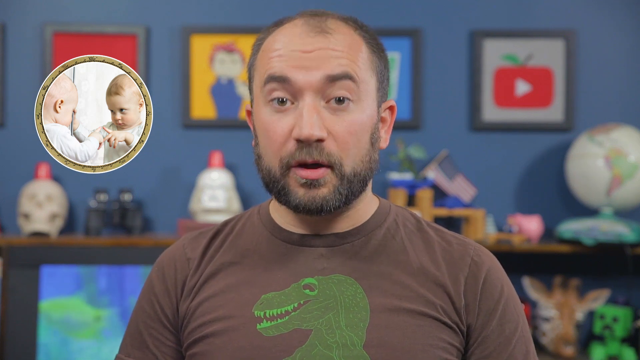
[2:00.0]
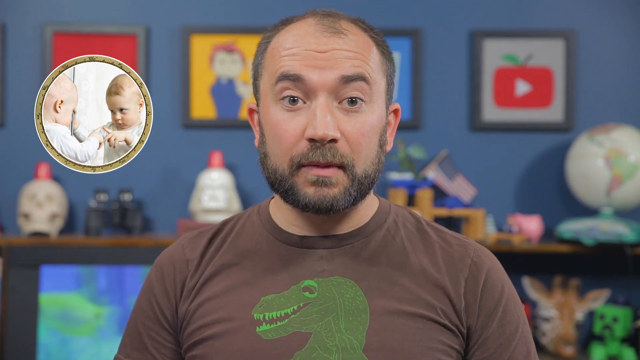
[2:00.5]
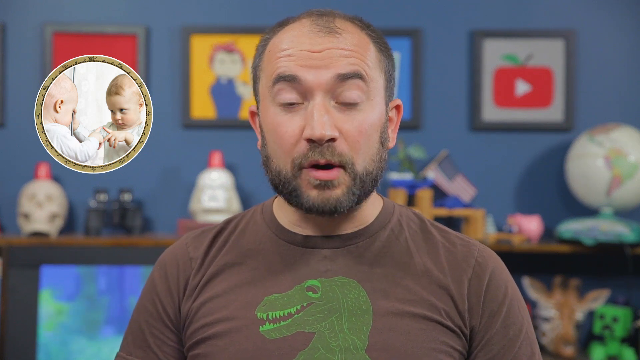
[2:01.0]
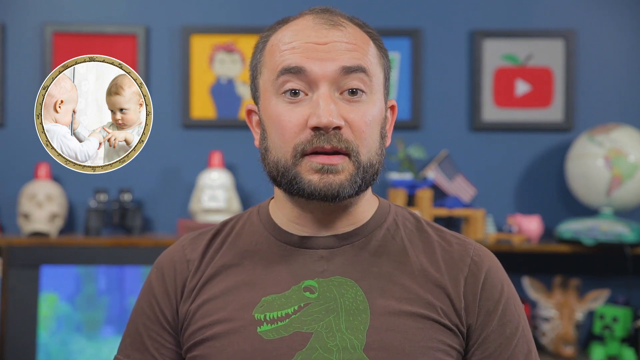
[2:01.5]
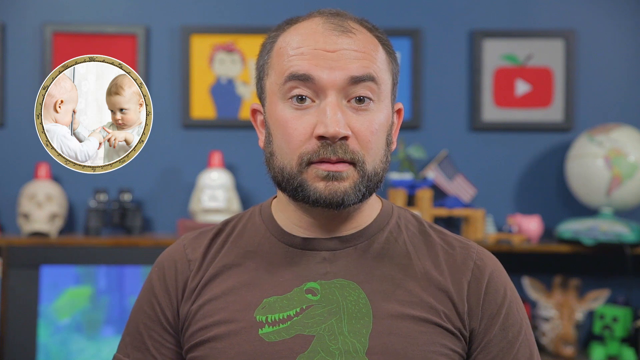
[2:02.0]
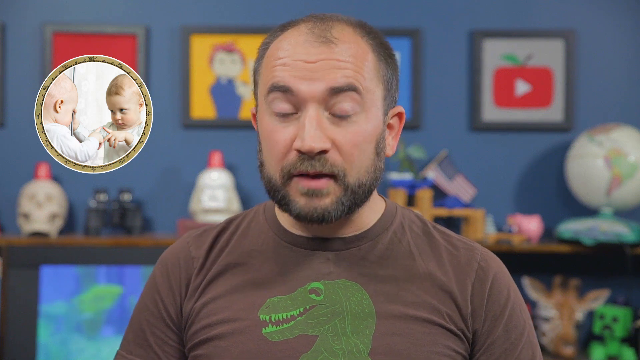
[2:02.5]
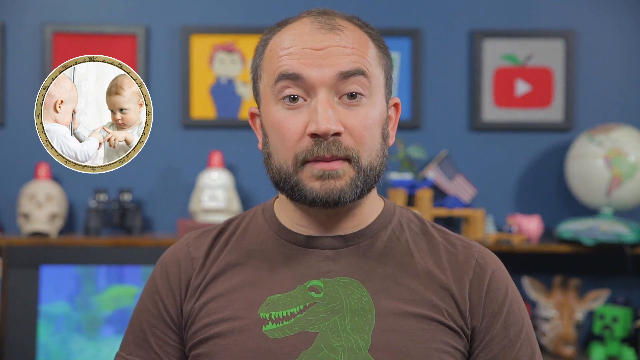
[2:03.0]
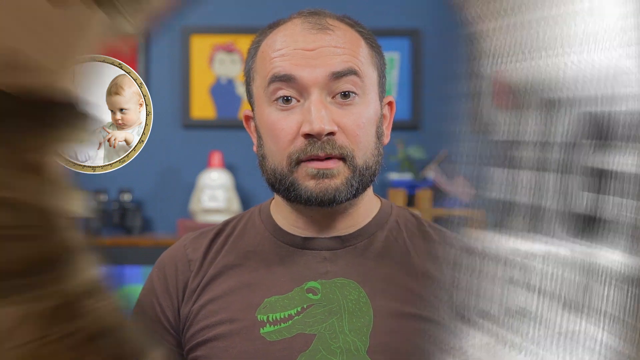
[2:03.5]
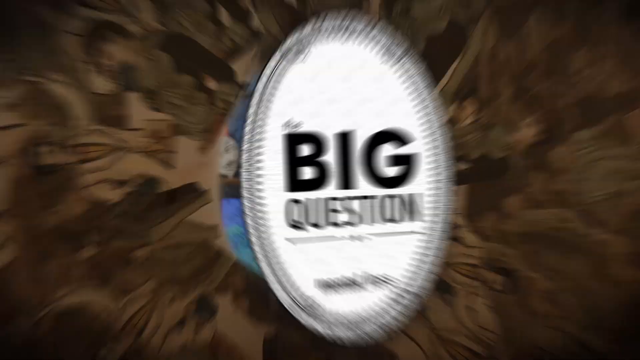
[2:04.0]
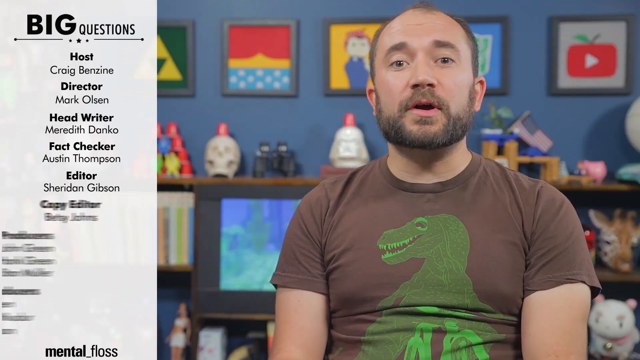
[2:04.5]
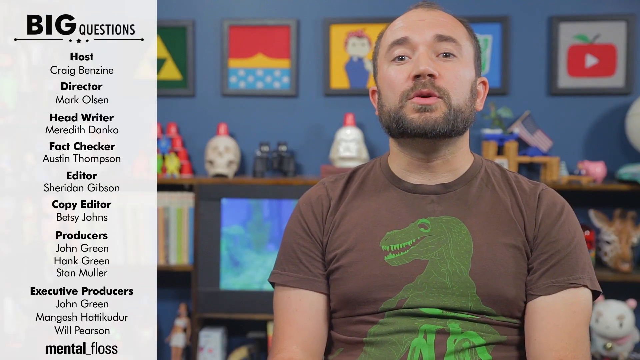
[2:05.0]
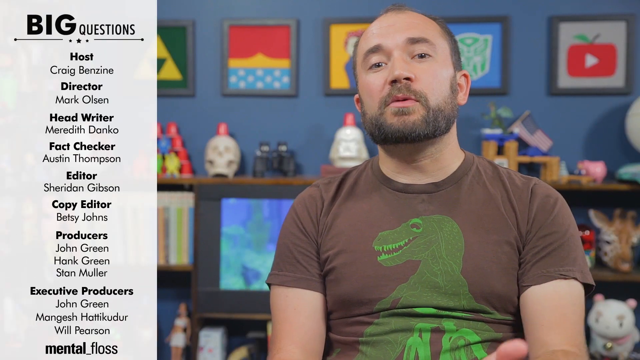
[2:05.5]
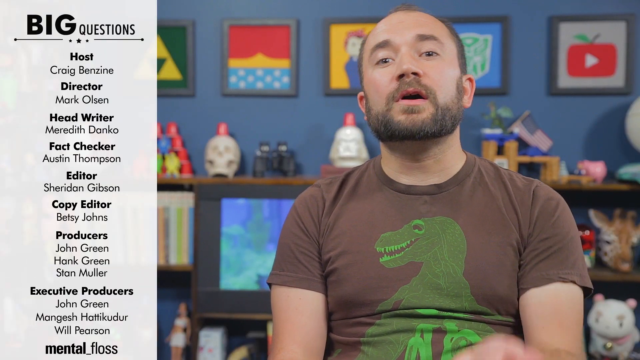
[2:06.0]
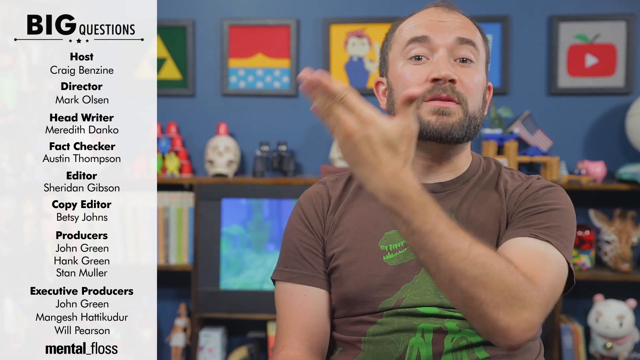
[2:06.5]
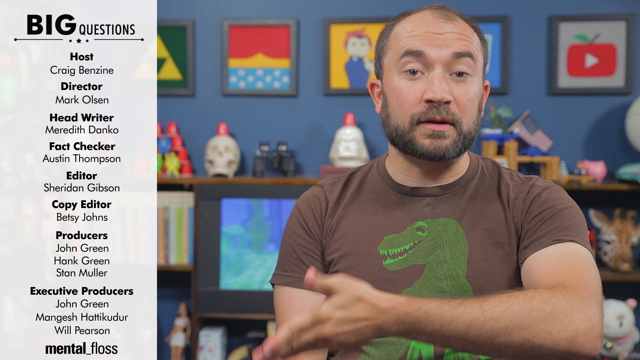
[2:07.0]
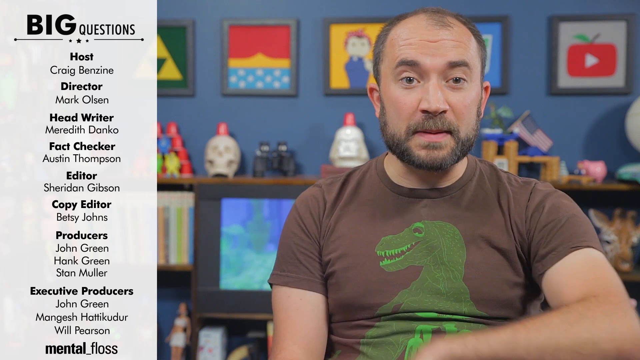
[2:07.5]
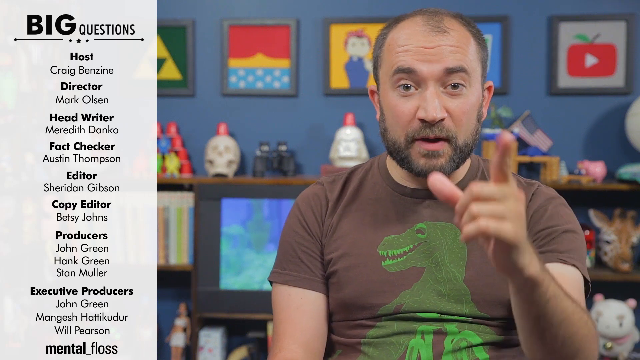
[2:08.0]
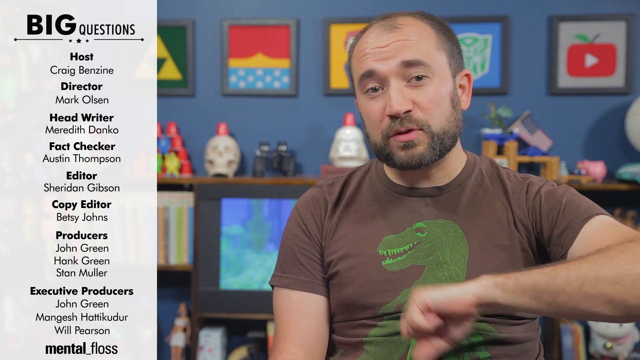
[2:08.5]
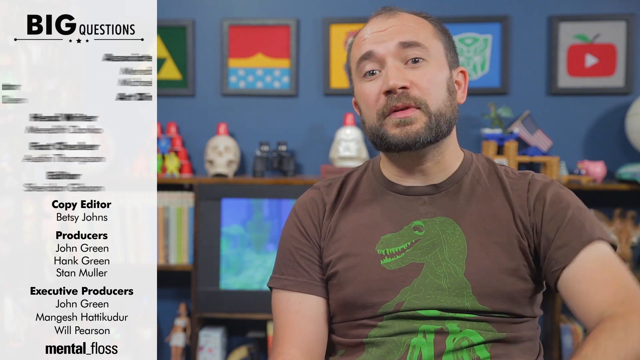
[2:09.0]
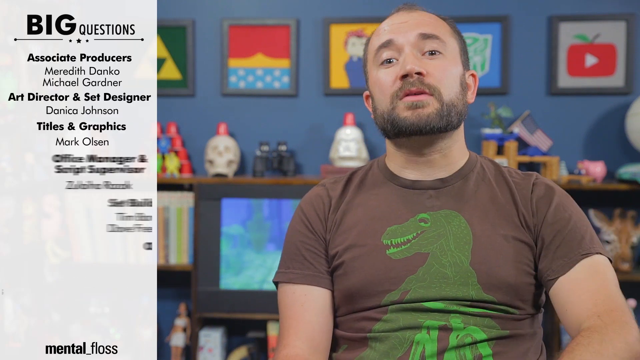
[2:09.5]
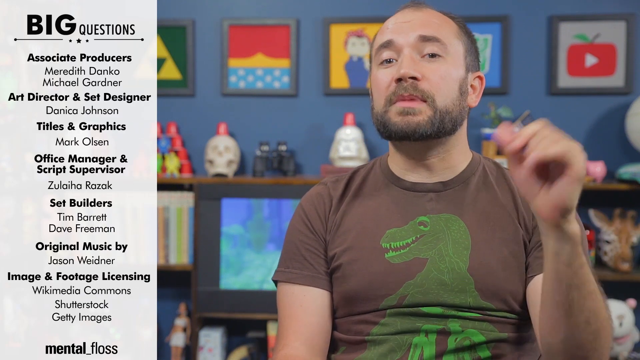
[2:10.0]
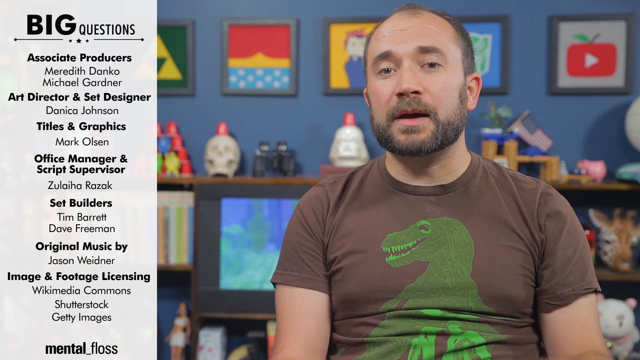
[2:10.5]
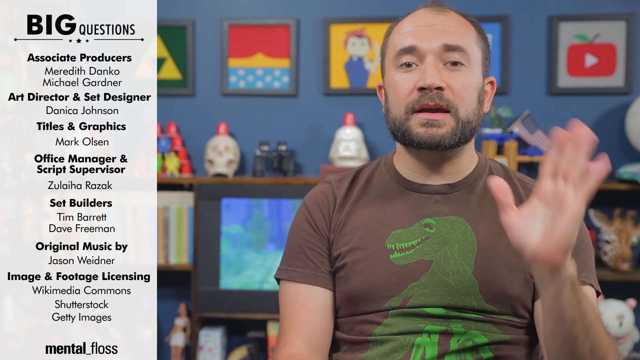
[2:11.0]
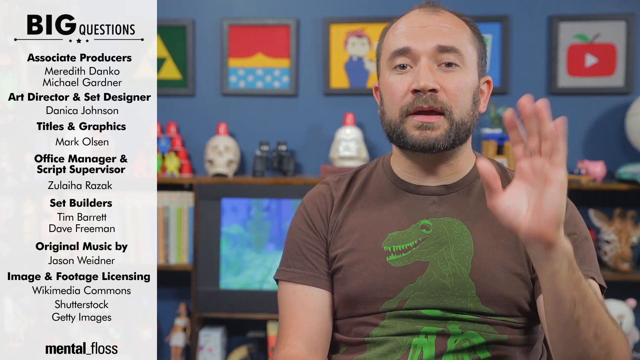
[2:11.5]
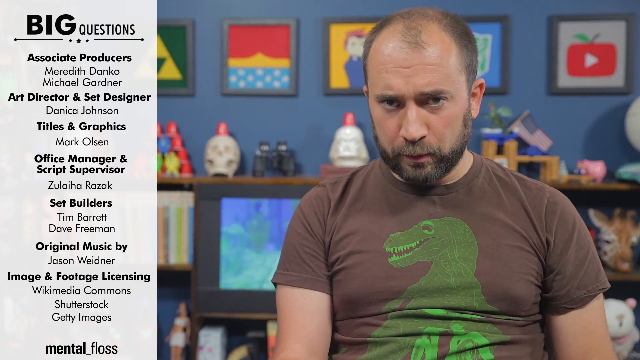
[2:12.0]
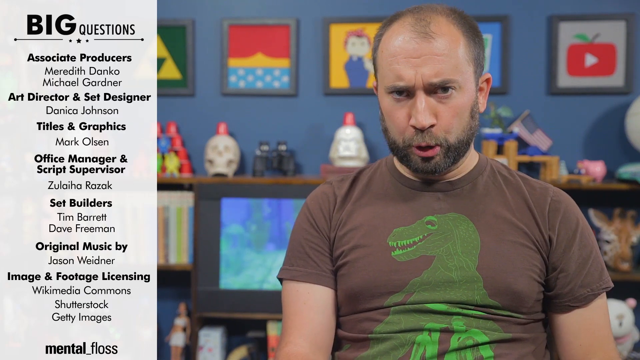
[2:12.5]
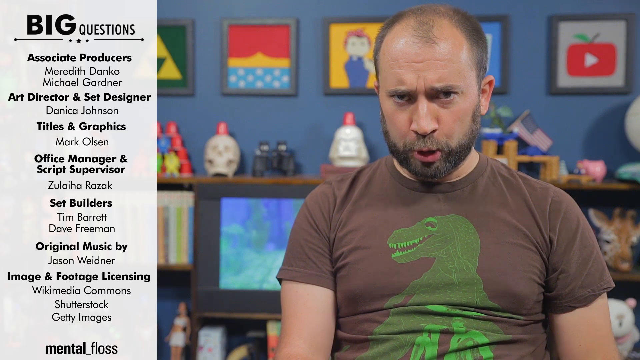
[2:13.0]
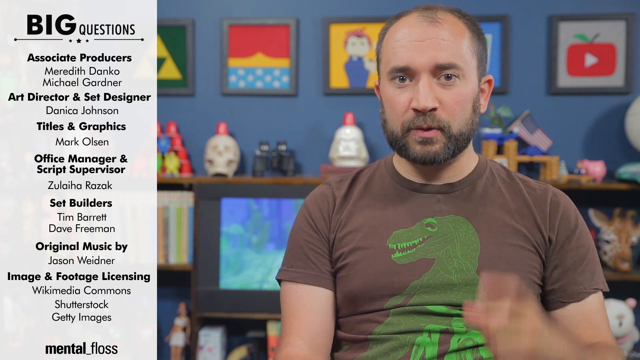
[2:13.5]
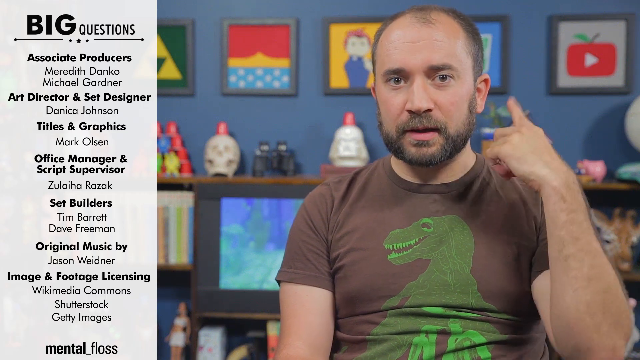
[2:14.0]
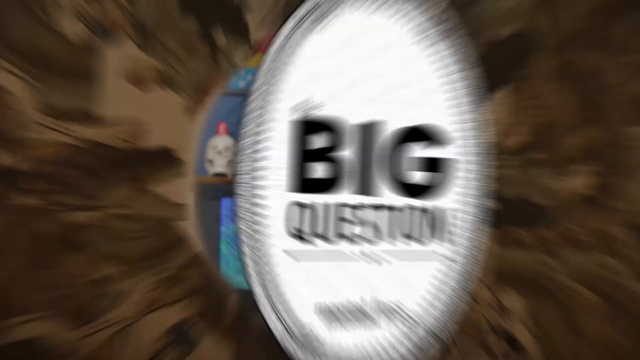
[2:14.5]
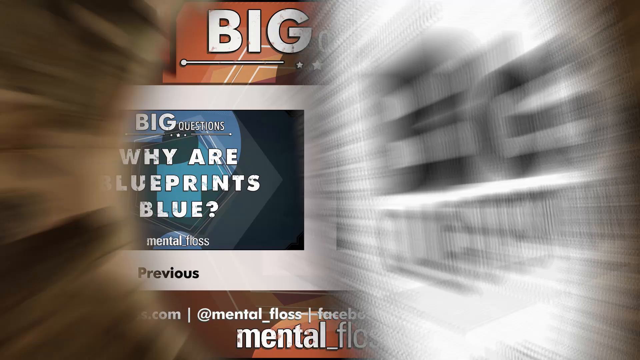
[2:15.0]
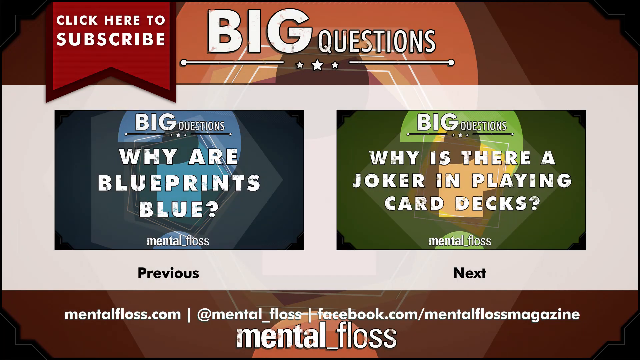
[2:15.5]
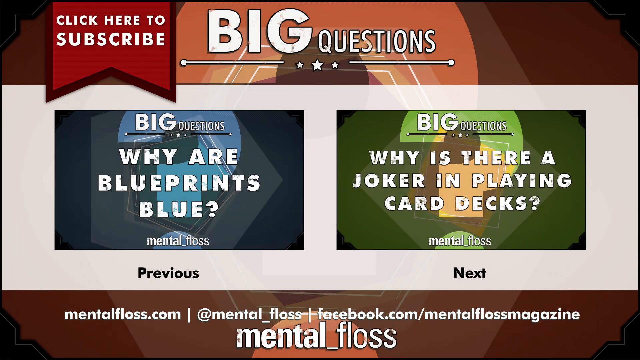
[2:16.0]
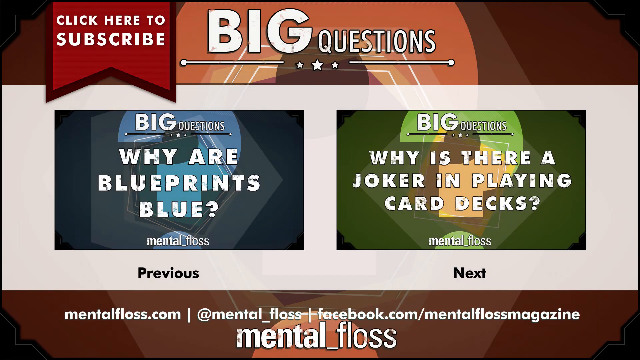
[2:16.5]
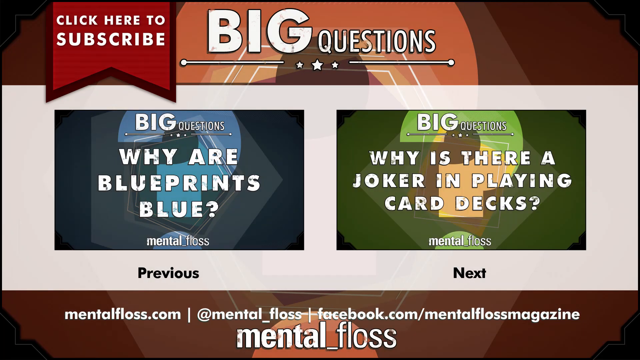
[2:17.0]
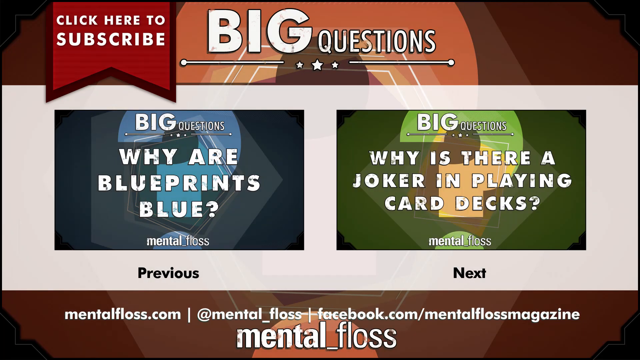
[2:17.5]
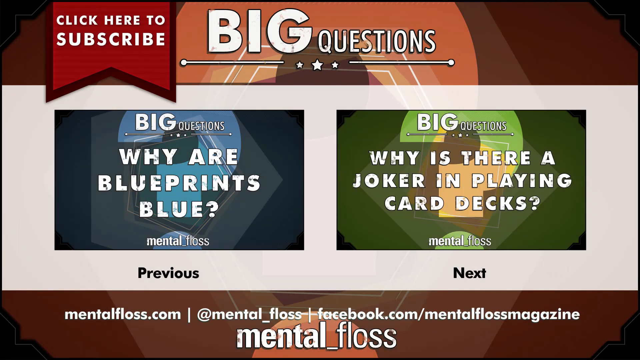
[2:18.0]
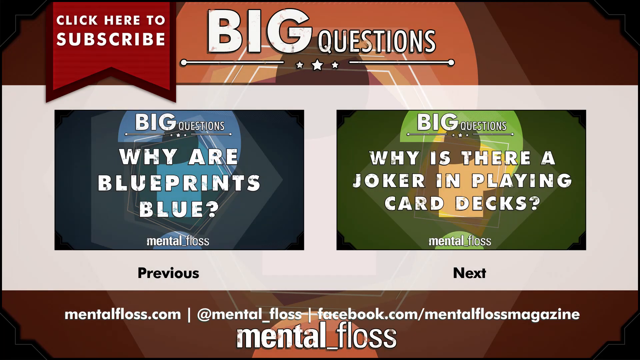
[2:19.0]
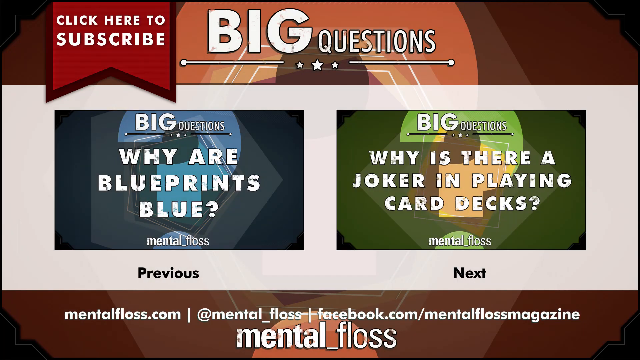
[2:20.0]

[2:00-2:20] A man wearing a brown shirt with a green dinosaur on it looks and talks towards the camera. To his side is a small circular image of two babies reaching out and touching each other. The man talks towards the camera, and then a transition appears with the text "The Big Question," surrounded by old-fashioned images of people. After the transition, the man remains on the right side of the screen, while part of the left side shows a list of credits, including host, director, and editor, before it rolls over to a new page with other people, including the set builders. The same "The Big Question" transition appears again, followed by a screen with a button to subscribe, two other questions, one labeled previous and one labeled next, a website URL, a Facebook page, and more.